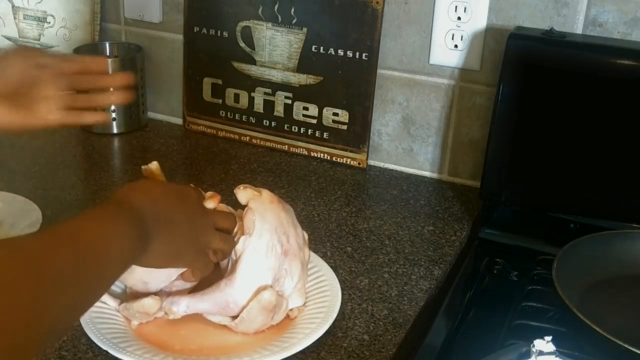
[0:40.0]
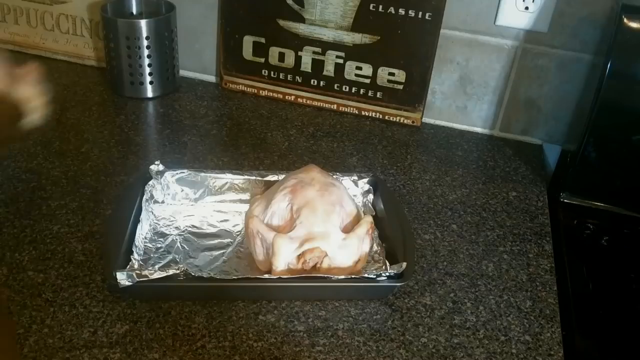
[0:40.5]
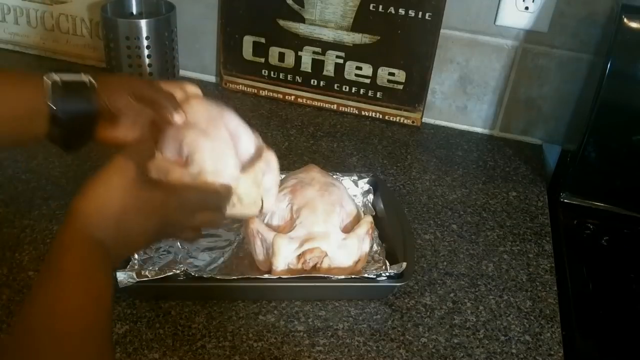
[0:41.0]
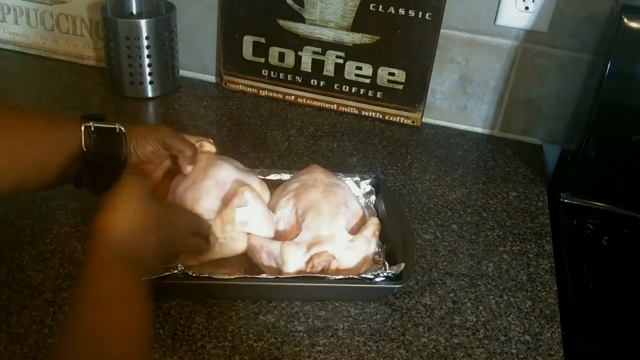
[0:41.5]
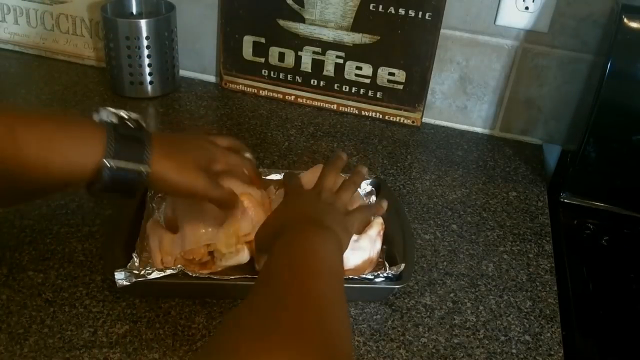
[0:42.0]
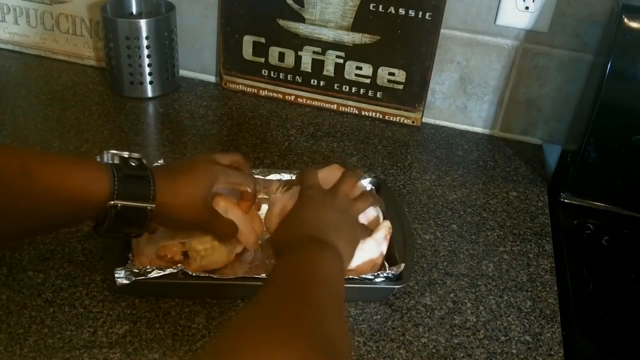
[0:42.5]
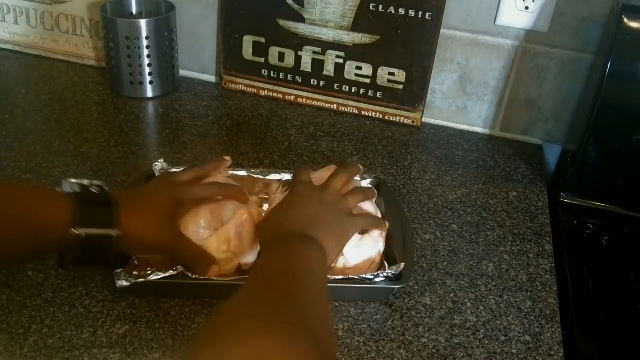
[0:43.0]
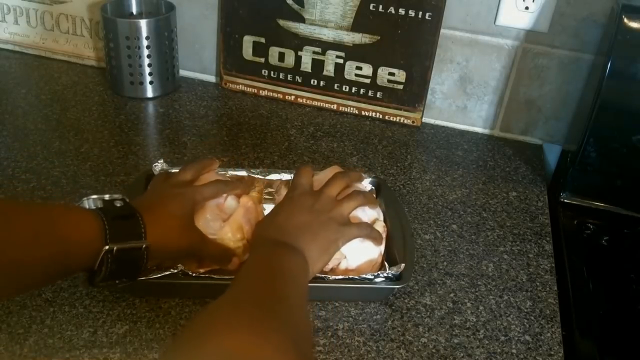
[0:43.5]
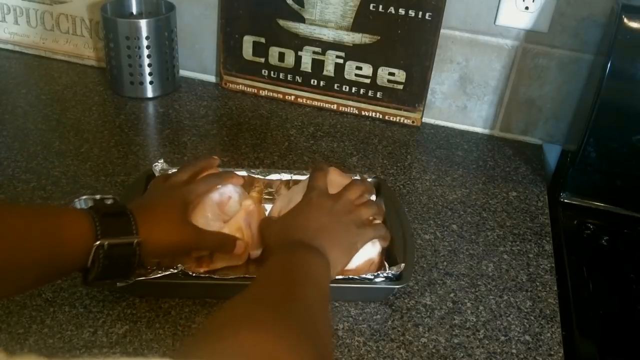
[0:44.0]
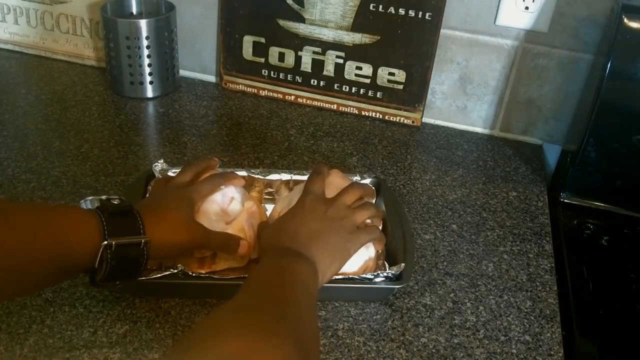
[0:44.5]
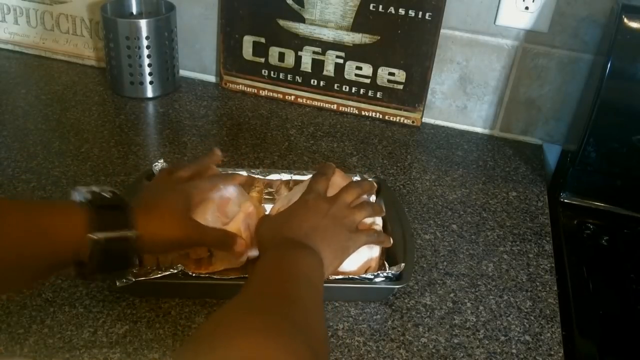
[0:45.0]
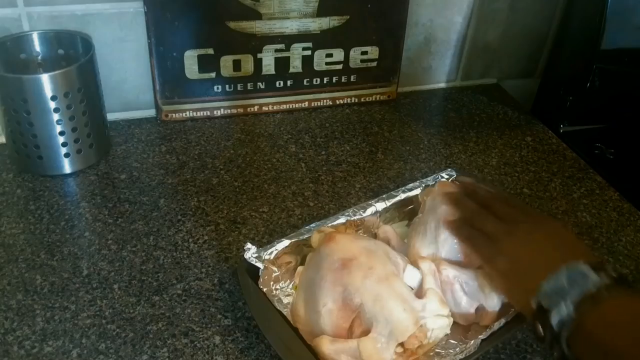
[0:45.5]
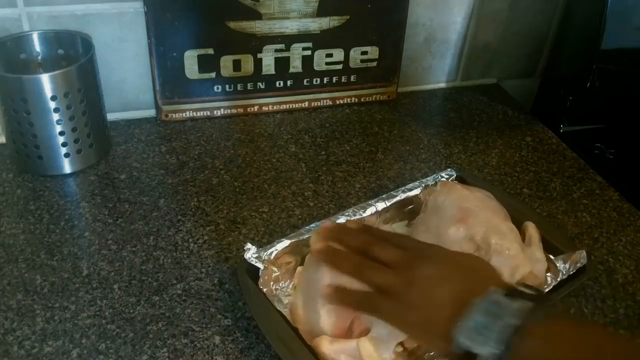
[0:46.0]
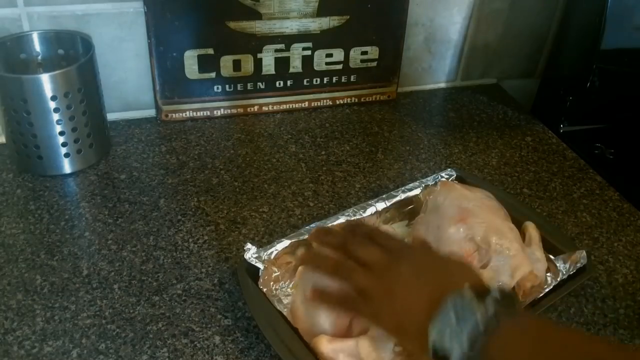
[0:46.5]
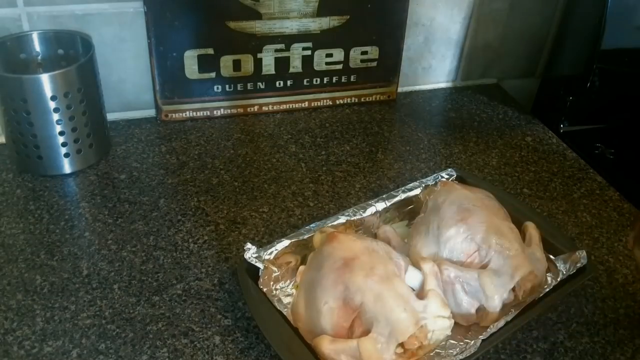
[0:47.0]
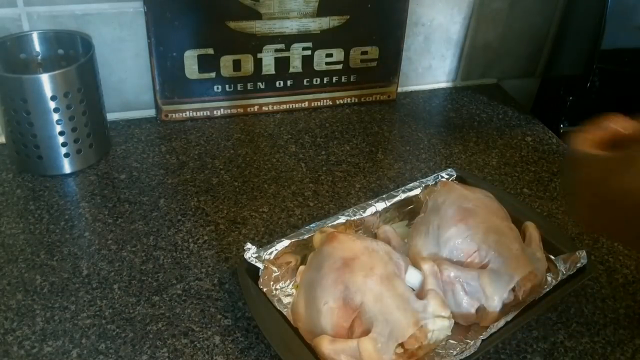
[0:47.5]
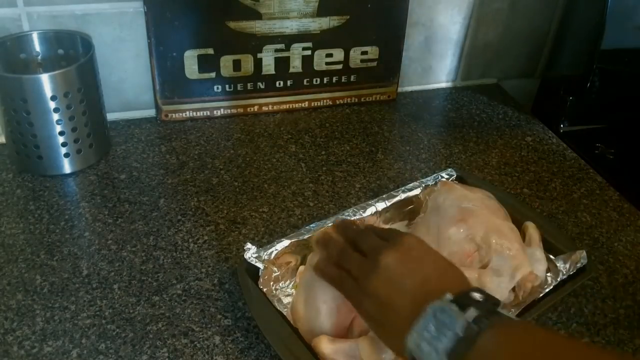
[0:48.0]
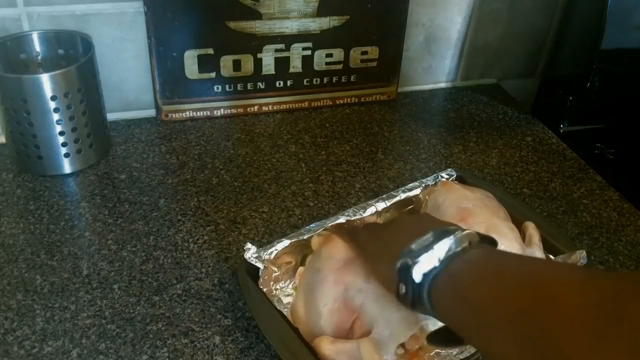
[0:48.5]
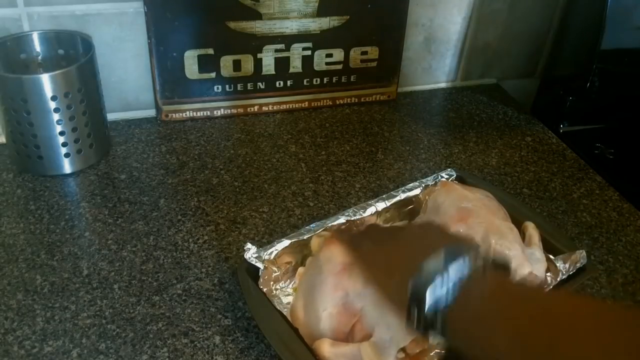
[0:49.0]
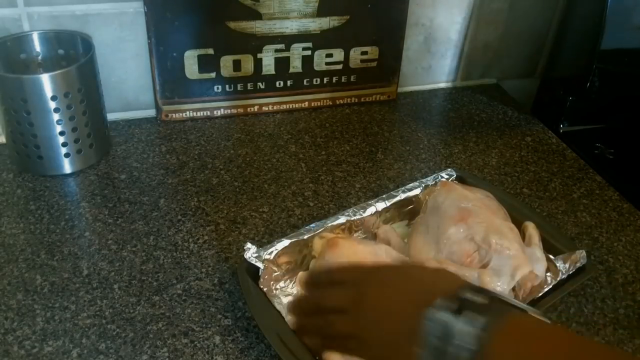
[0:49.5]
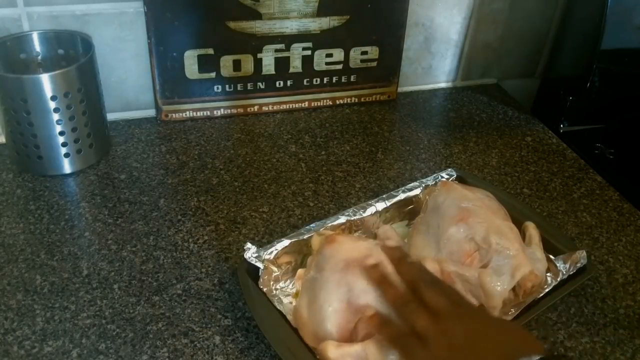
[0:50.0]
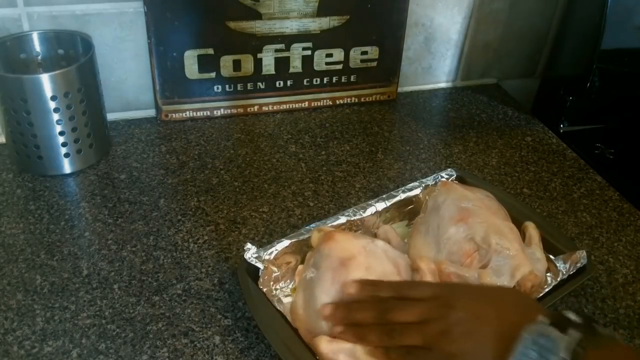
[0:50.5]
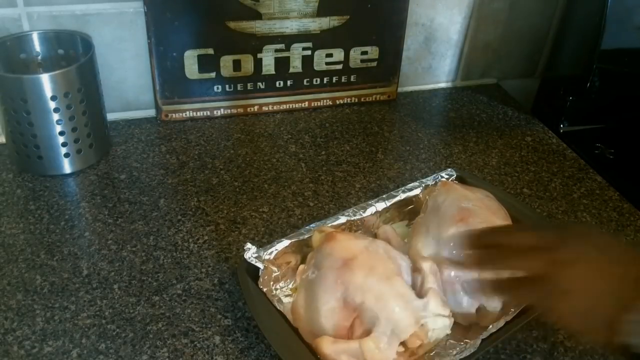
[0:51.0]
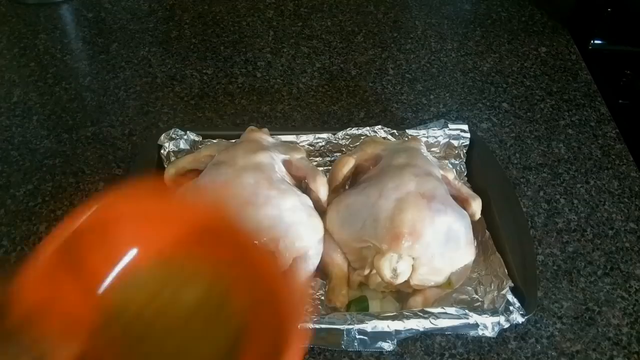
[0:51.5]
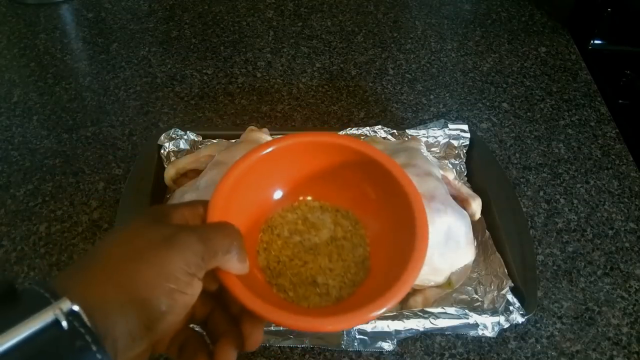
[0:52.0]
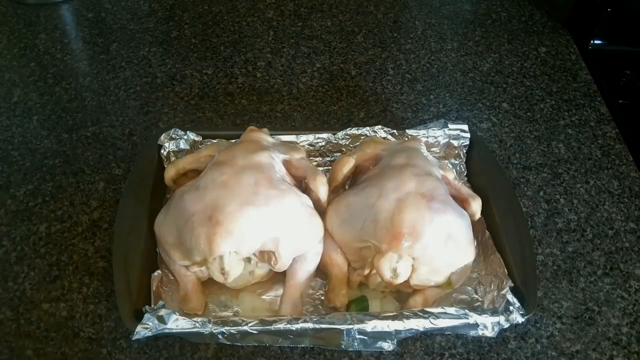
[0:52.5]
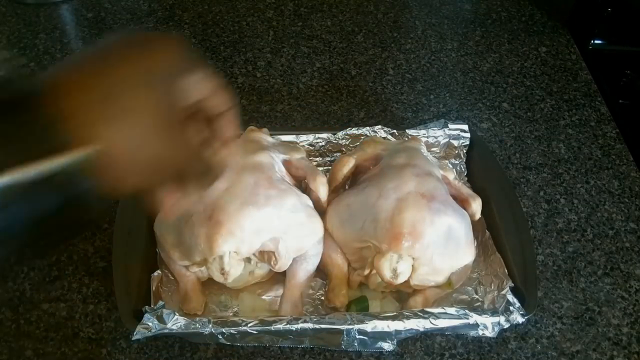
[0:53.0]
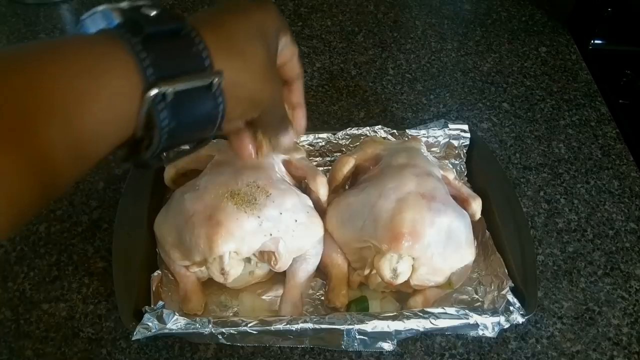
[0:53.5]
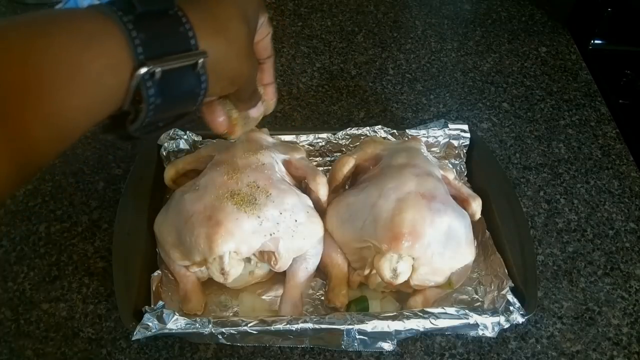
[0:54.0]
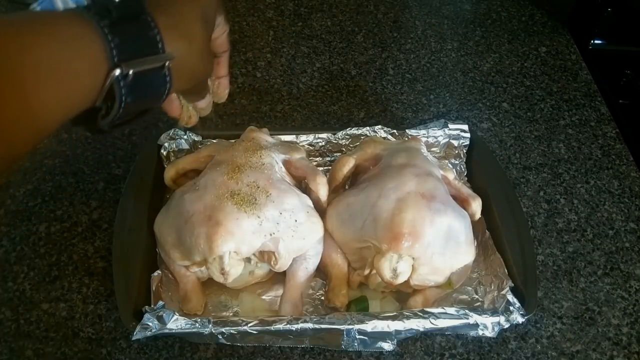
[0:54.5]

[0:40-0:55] She puts the Cornish hens onto a tray she lined with tinfoil, placing them side by side, very close together. She puts some of the spice on the outside as a kind of rub and rubs it in with her hands. Then she takes the other bowl she had prepared earlier, apparently salt and paprika, and sprinkles it onto the outside of the hens. The hens have not yet gone into the oven. She is still wearing the giant wristwatch band, and her face is still not shown.